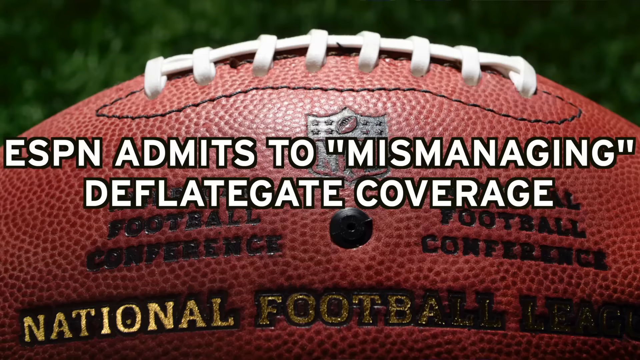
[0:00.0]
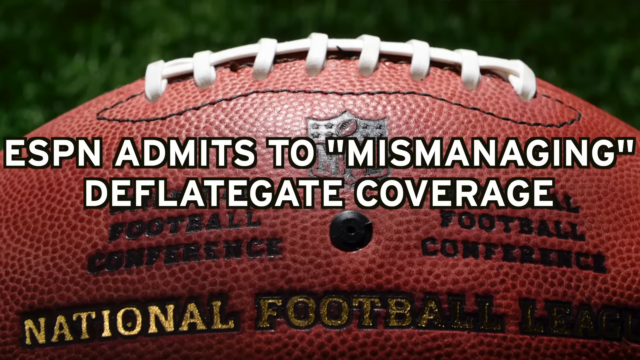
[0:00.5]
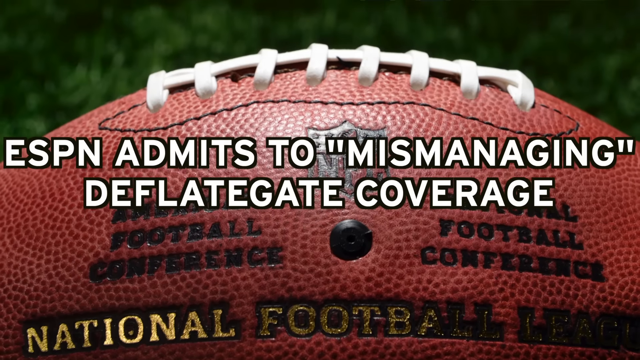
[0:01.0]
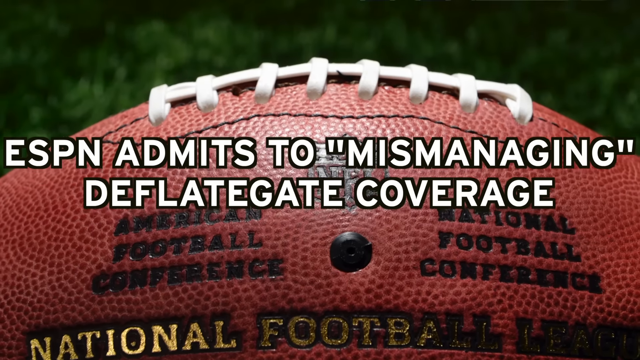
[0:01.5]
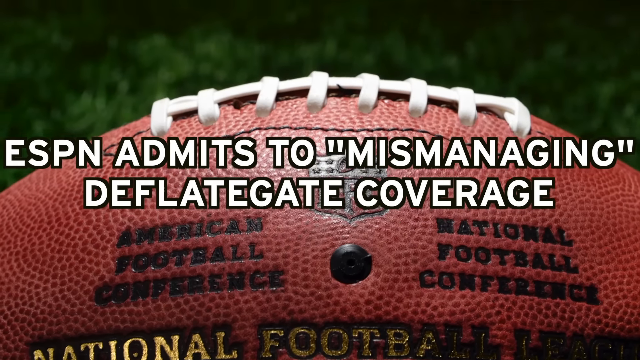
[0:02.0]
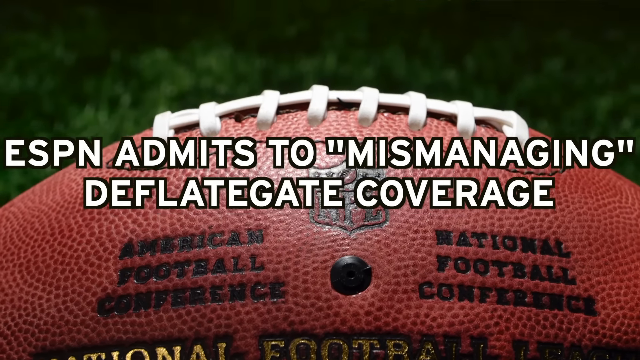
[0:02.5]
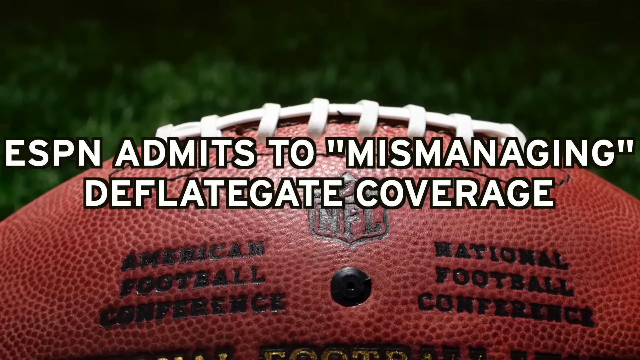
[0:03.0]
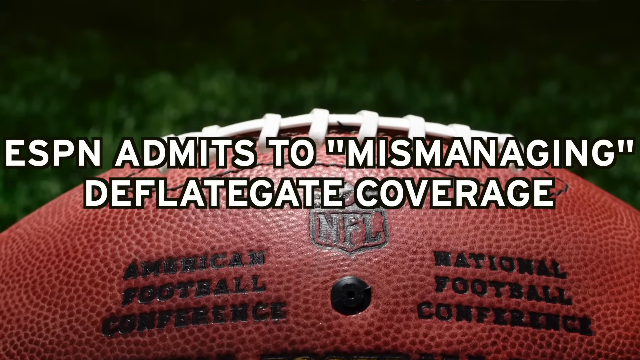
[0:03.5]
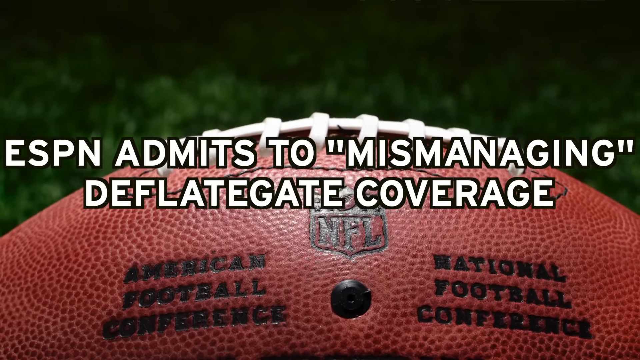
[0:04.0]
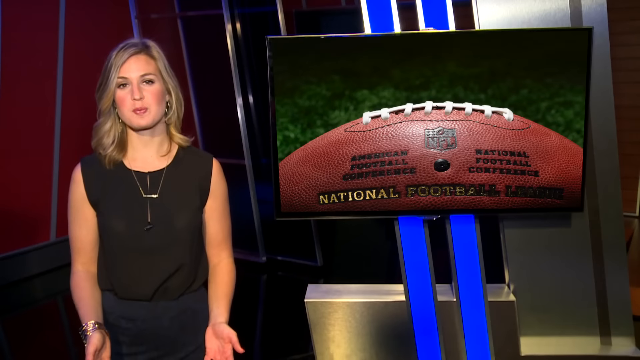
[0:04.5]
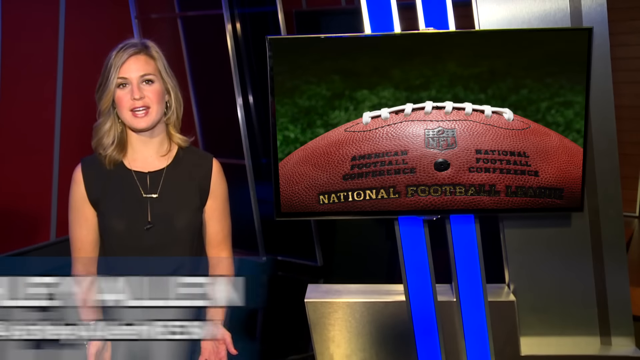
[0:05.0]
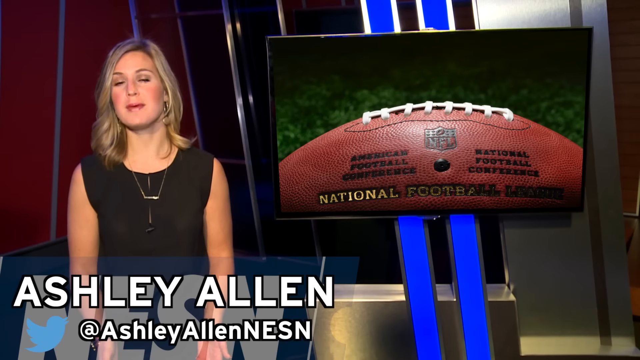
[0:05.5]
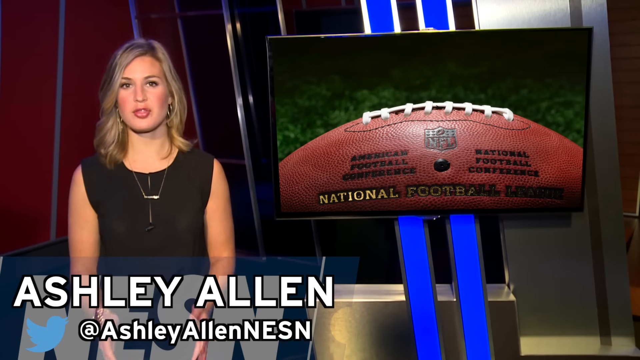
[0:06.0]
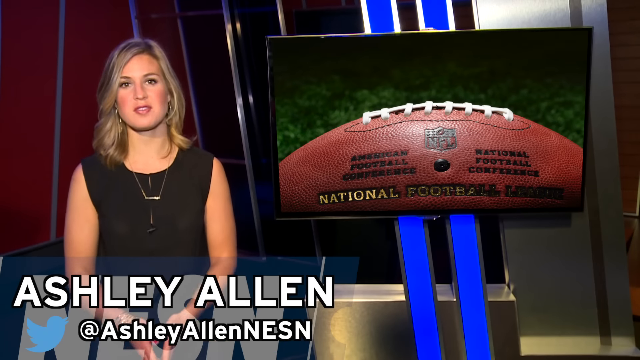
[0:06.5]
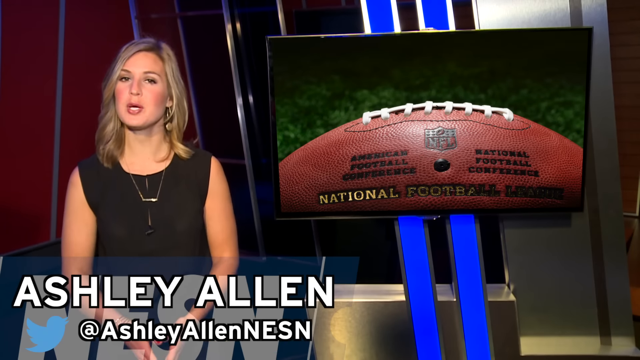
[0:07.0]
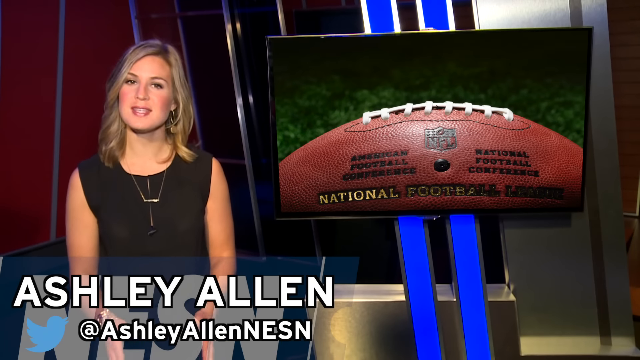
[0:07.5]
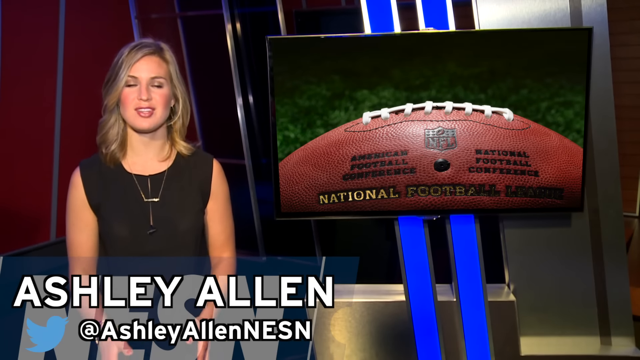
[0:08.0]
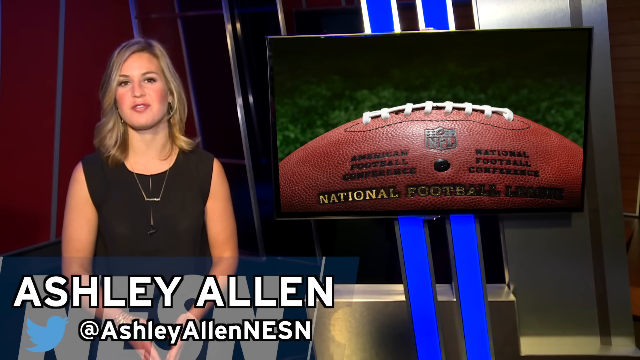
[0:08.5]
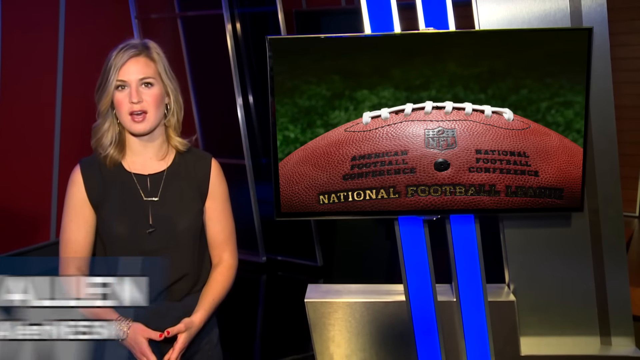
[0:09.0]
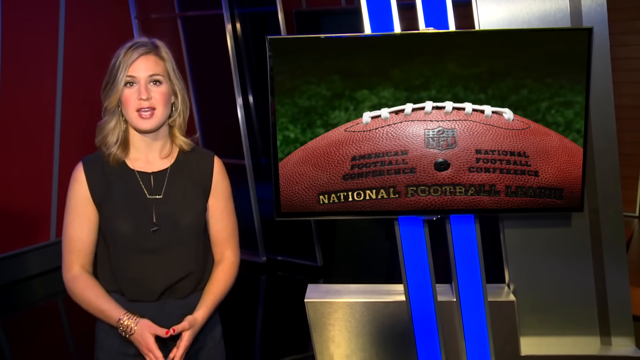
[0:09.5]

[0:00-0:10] The video opens on a close-up of a football, framed so only about 60% of it is visible, as the camera slowly rises. Text on the screen states that ESPN admits to mismanaging the deflategate coverage. The video then transitions to a news anchor, a blonde woman named Ashley Allen, wearing a black sleeveless dress and a necklace. On her left, another screen presents images supporting her news coverage, and in front of her a label shows her social media profiles.